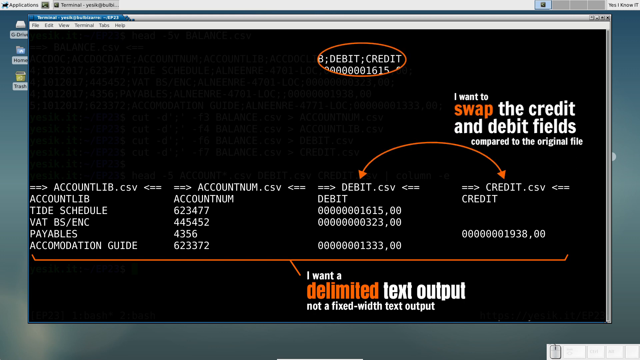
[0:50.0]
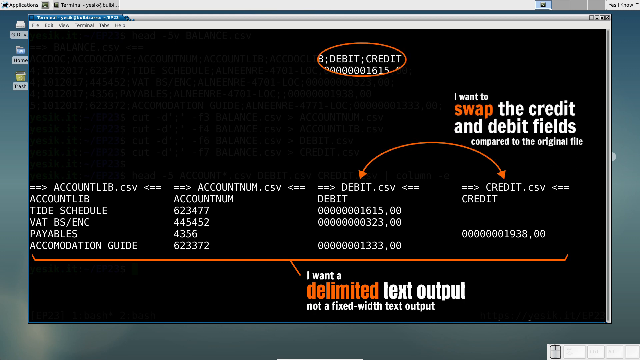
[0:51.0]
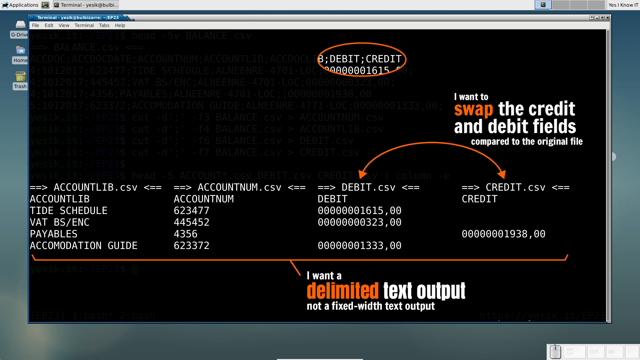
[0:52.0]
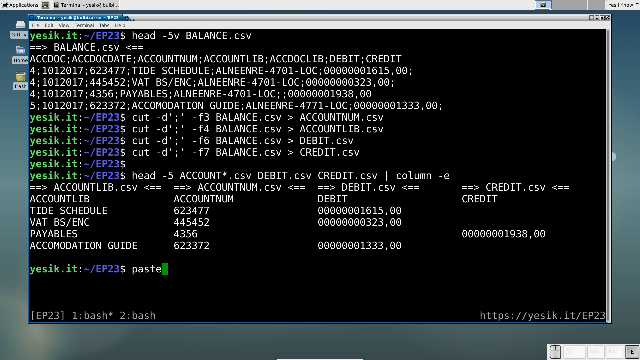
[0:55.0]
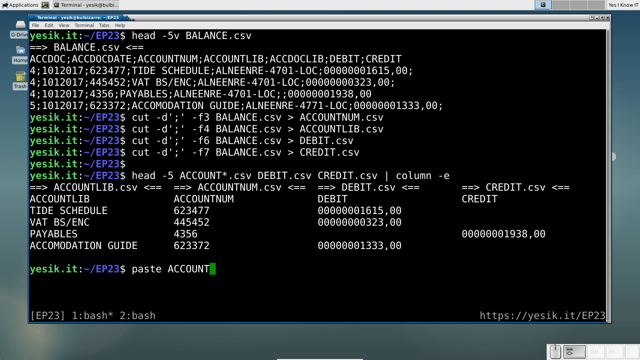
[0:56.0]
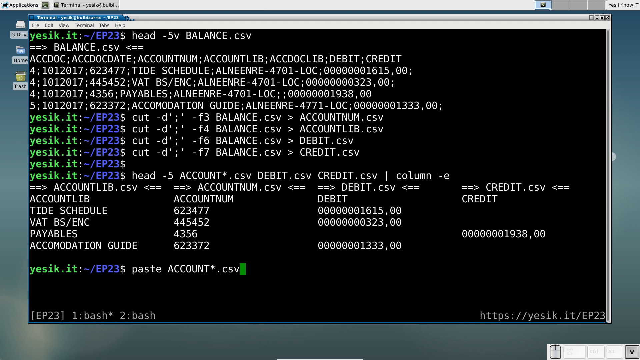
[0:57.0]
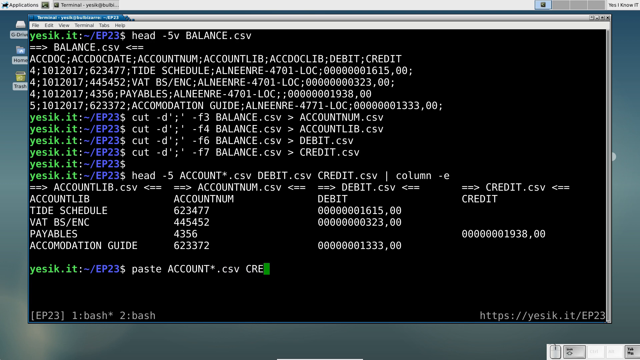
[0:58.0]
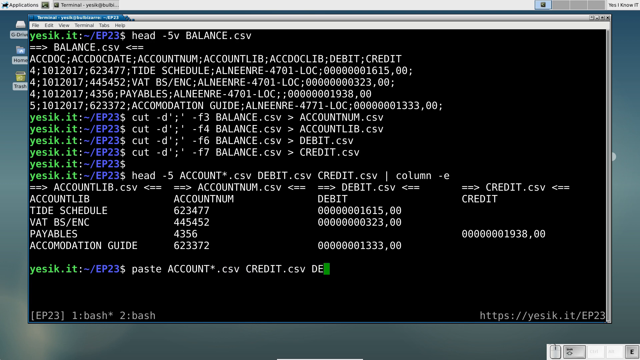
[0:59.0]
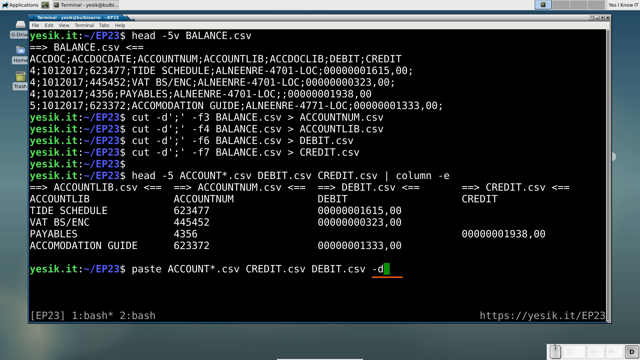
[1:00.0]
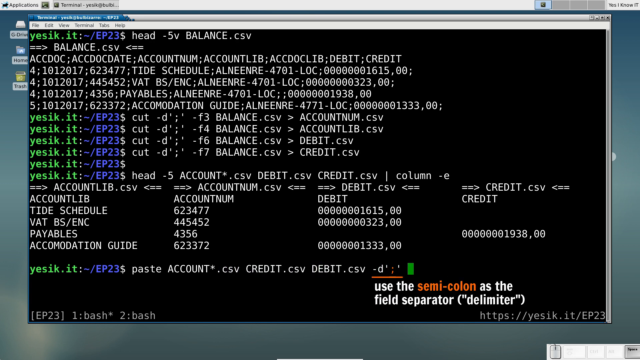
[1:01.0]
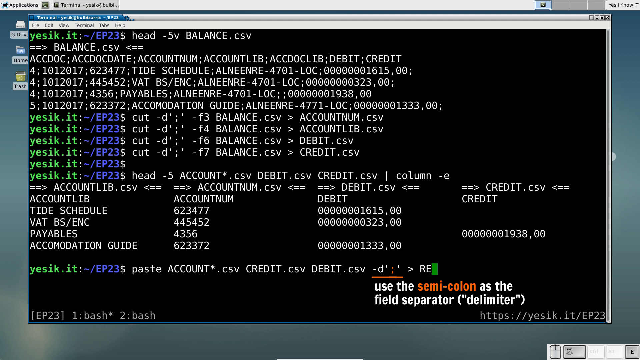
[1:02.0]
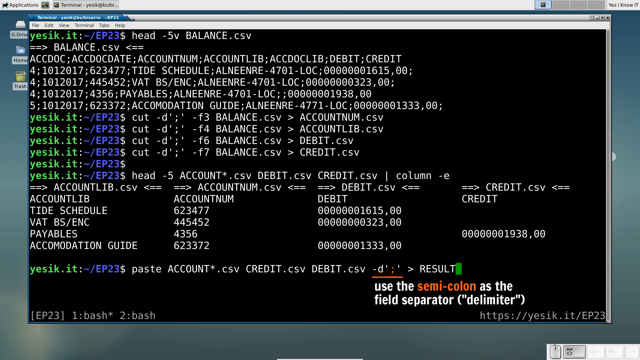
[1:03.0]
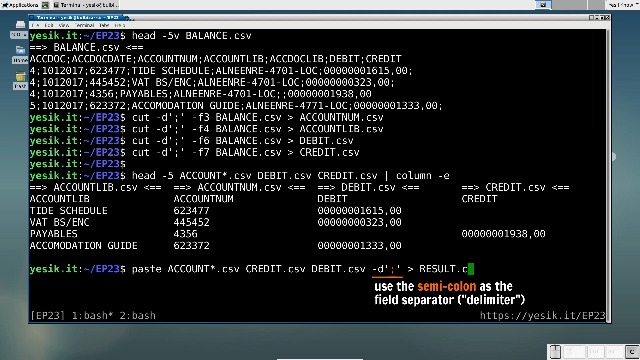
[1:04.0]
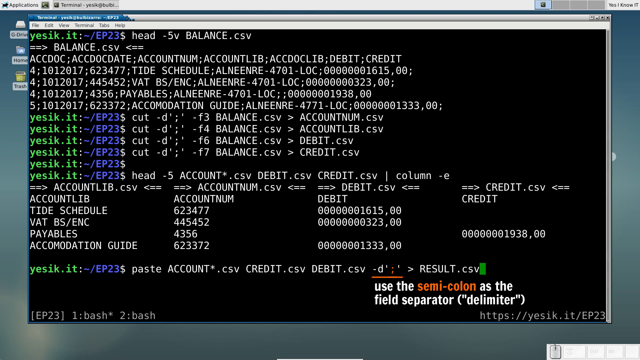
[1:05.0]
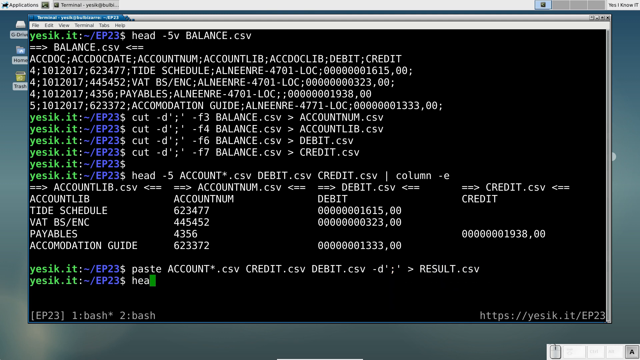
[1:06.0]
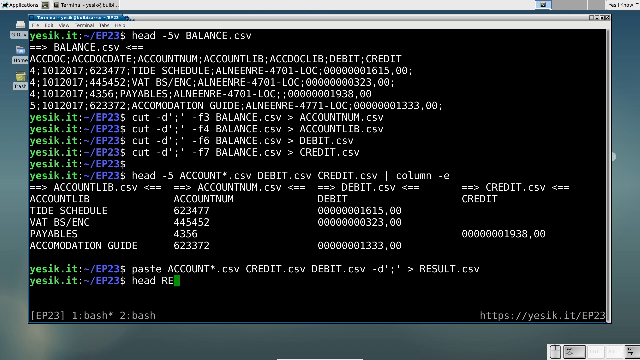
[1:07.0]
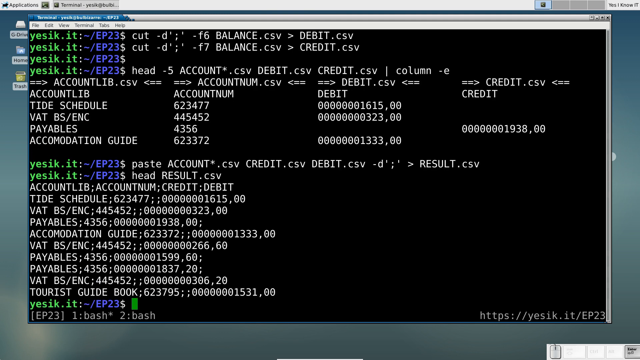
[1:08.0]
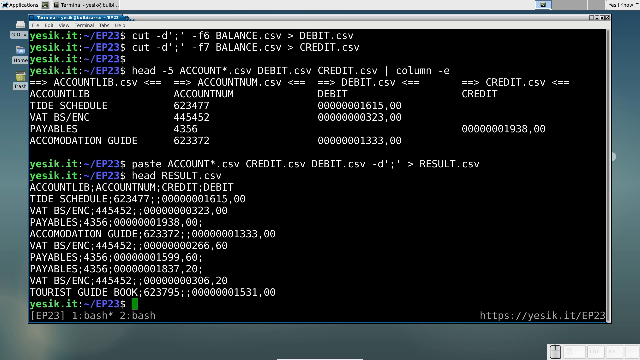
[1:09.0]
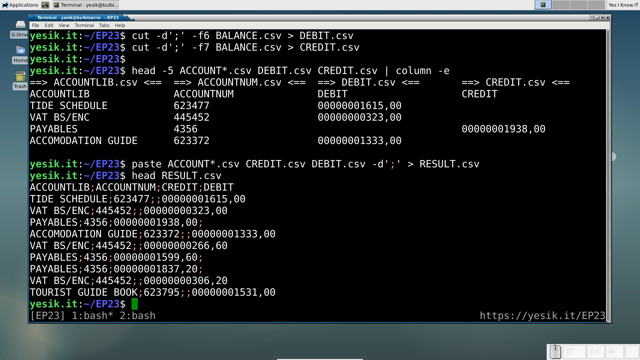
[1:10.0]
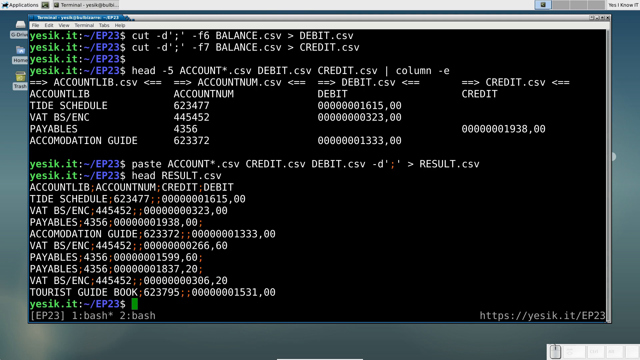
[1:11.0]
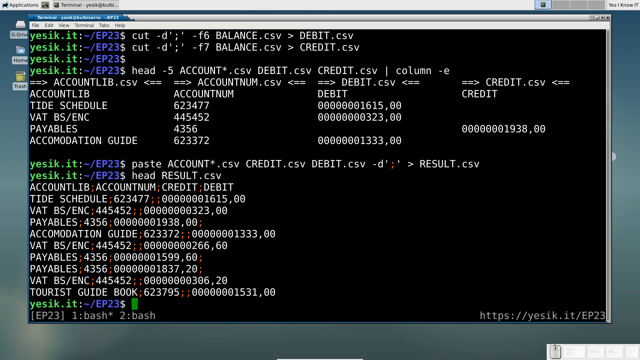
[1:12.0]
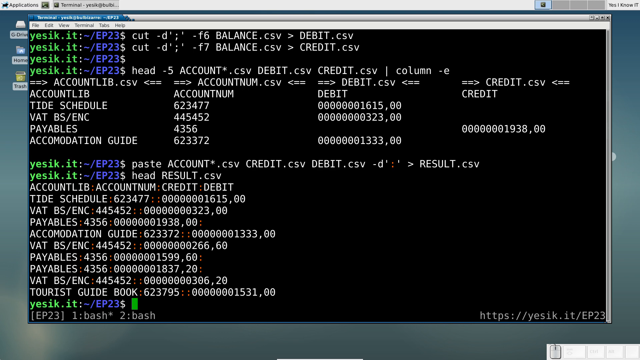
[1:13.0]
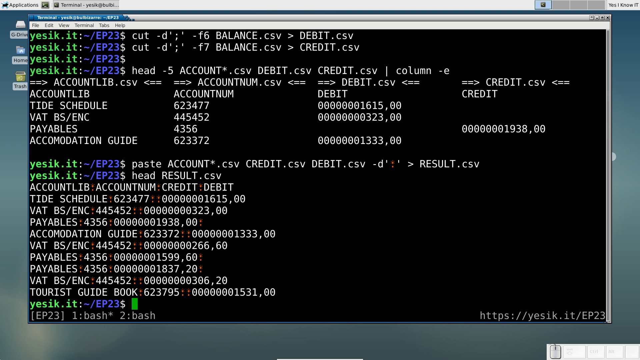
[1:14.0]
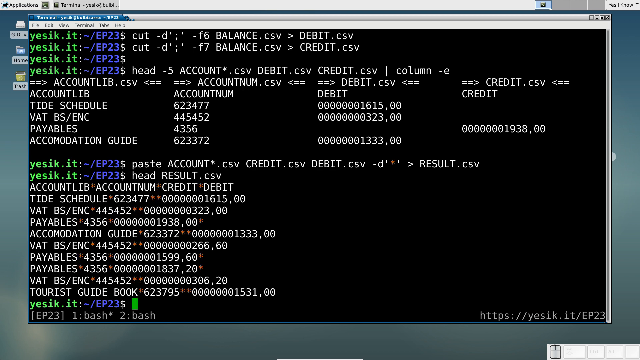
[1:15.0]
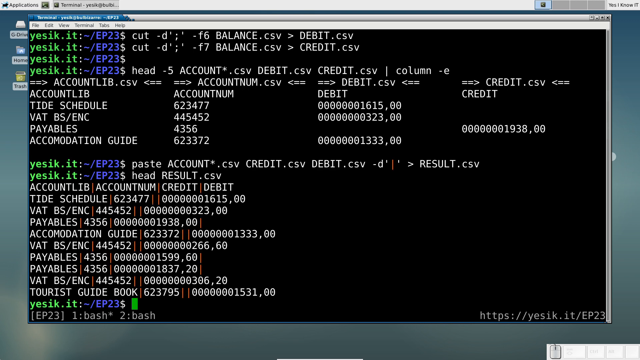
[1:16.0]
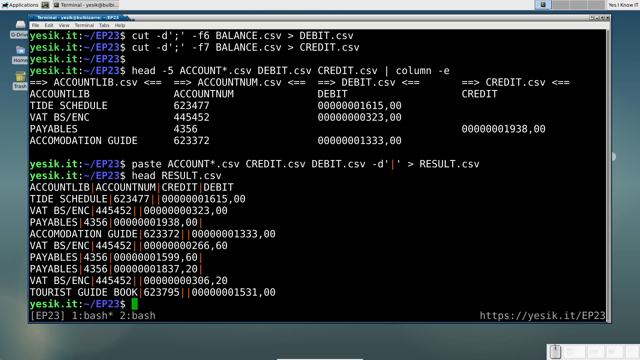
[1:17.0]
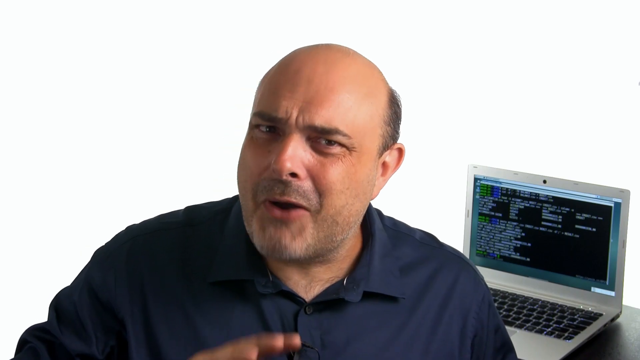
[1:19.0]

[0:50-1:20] The laptop screen shows the pop-up in the center, taking up most of the screen. In the top right, text reads "I want to swap the credit and debit fields compared to the original file." Below it, an arrow arches over to the left and over to the right. Debit is on the left side and credit on the right, with account numbers and account amounts below. That goes away, and more text is typed at the bottom about the paste account credit and debit, saying to use the same colon as the field separator. The cursor at the front of the typing is light green. The typing moves down to another line and continues, until the field is completely full of text from top to bottom across the whole screen. It cuts back to the man, whose head is now more in the center; his body has shifted a little and covers the bottom left corner of the open laptop behind him. The top button of his shirt is unbuttoned. He leans forward with his head slightly tilted to the left, the top of it leaning a little to the right, eyes kind of squinted closed. His left hand comes up, palm toward the camera, and kind of goes over to the left.